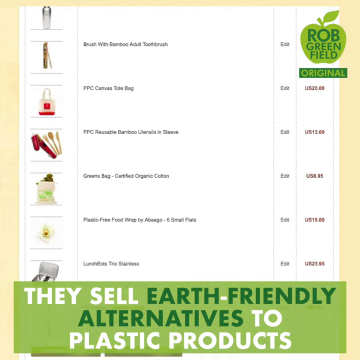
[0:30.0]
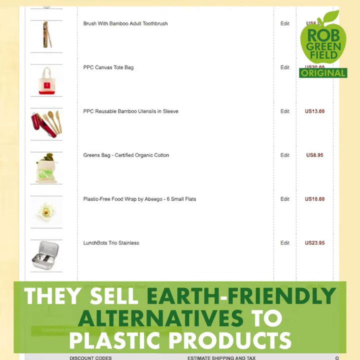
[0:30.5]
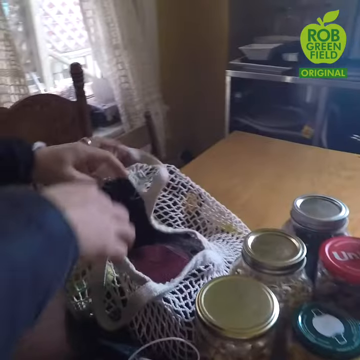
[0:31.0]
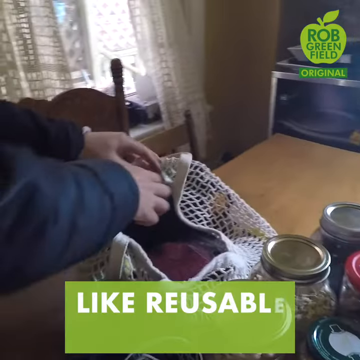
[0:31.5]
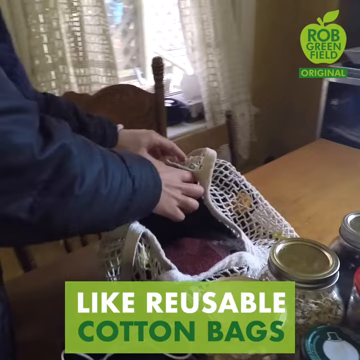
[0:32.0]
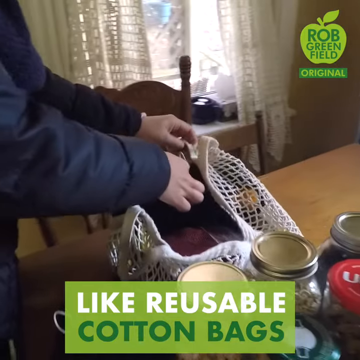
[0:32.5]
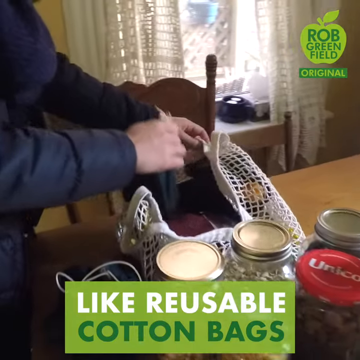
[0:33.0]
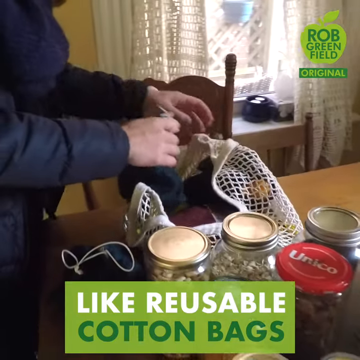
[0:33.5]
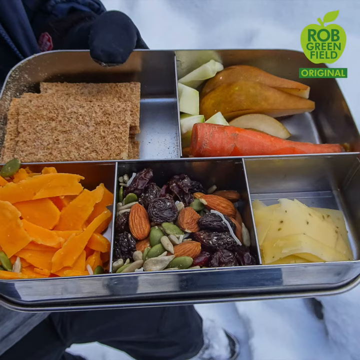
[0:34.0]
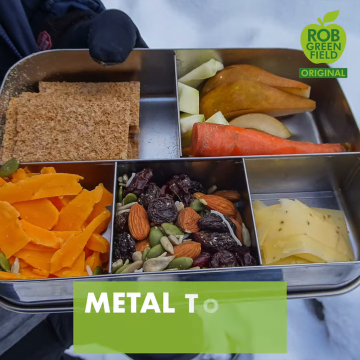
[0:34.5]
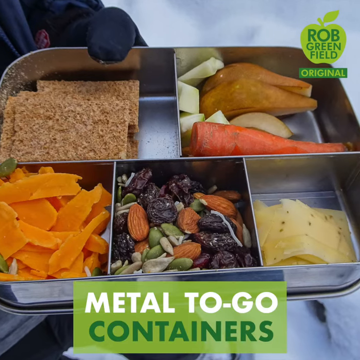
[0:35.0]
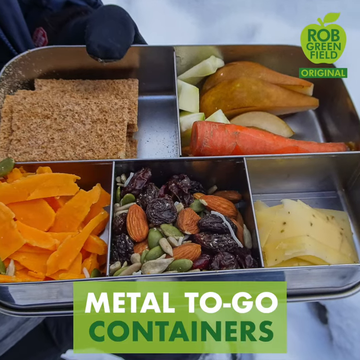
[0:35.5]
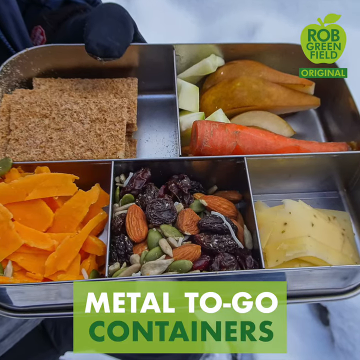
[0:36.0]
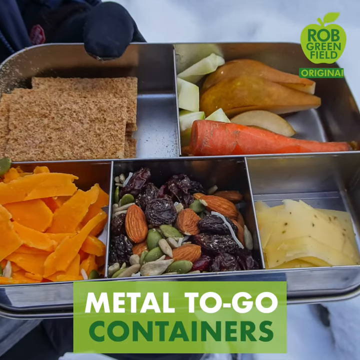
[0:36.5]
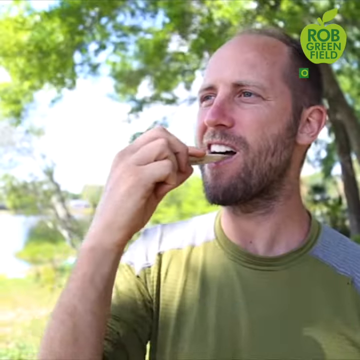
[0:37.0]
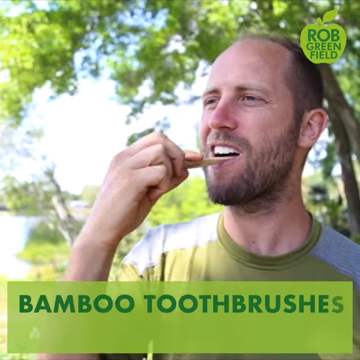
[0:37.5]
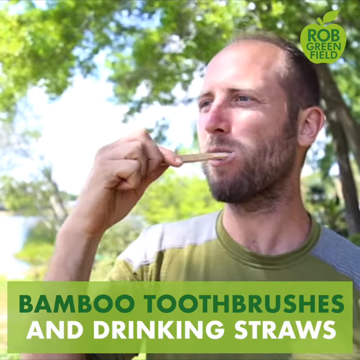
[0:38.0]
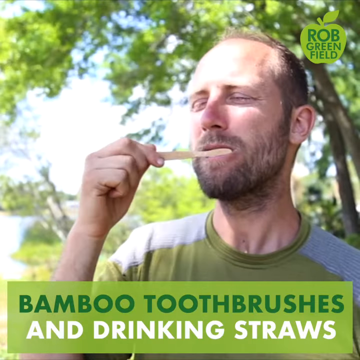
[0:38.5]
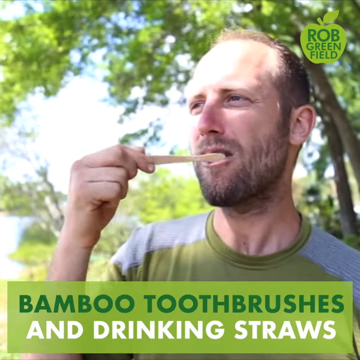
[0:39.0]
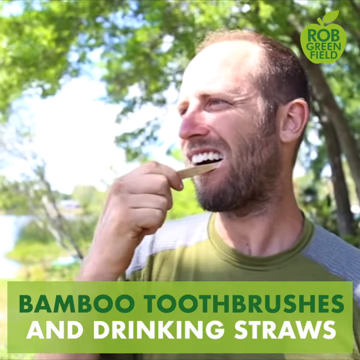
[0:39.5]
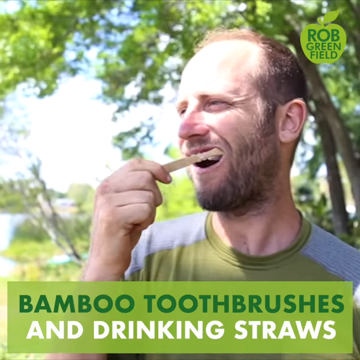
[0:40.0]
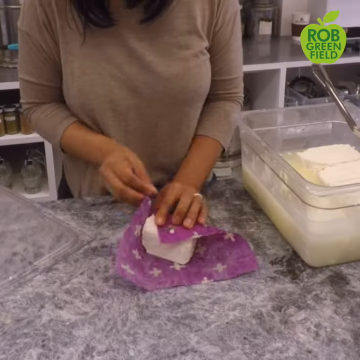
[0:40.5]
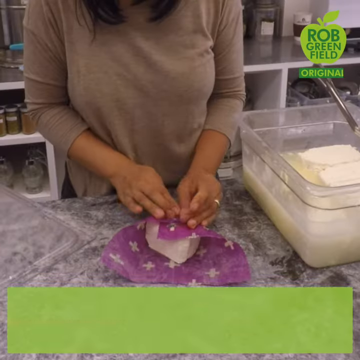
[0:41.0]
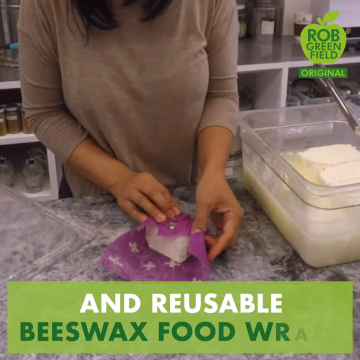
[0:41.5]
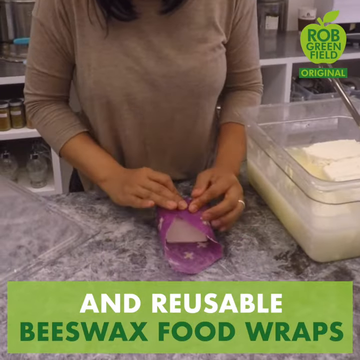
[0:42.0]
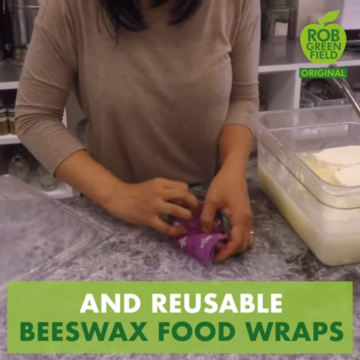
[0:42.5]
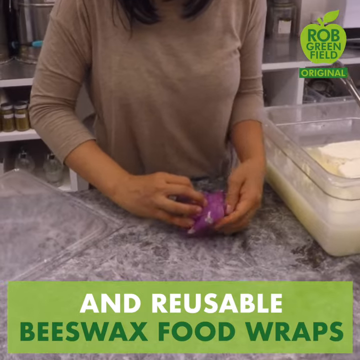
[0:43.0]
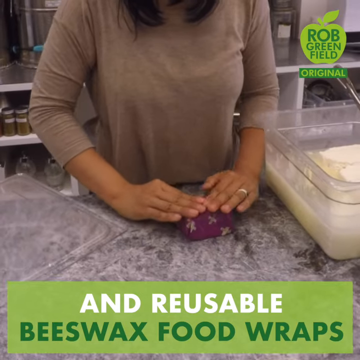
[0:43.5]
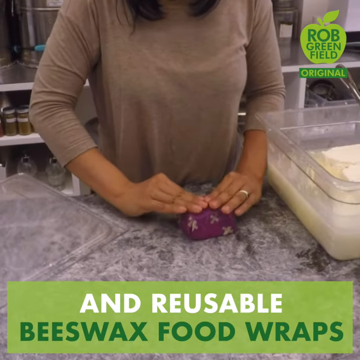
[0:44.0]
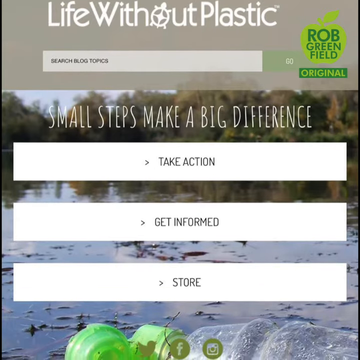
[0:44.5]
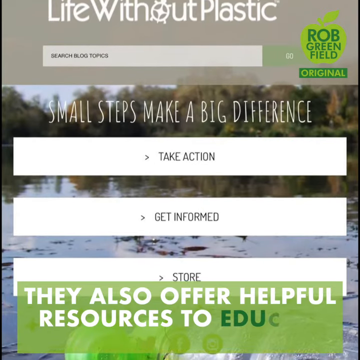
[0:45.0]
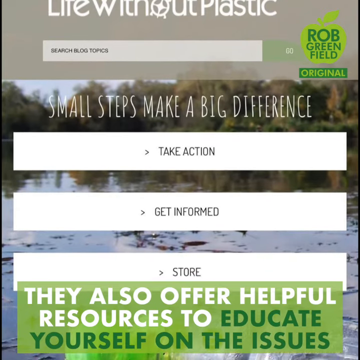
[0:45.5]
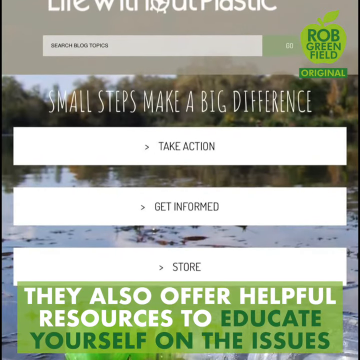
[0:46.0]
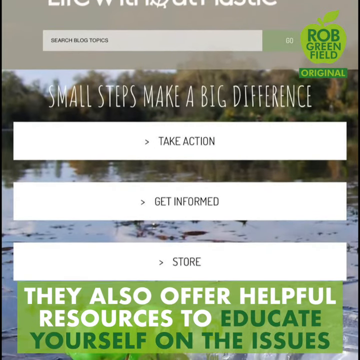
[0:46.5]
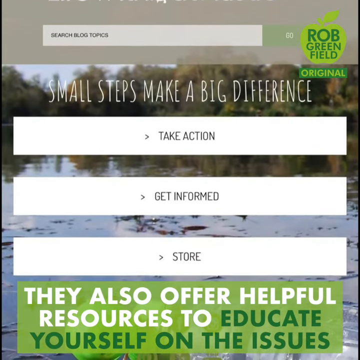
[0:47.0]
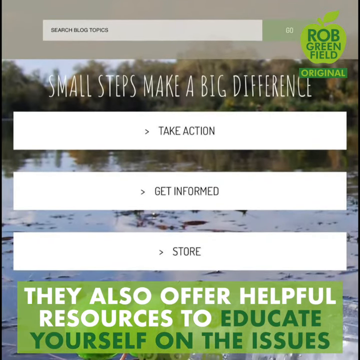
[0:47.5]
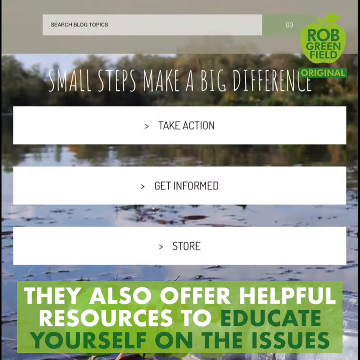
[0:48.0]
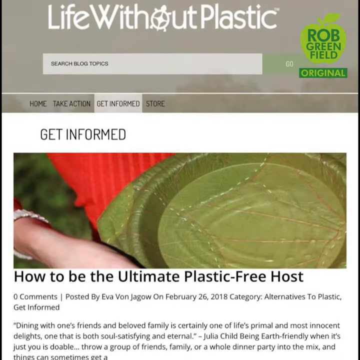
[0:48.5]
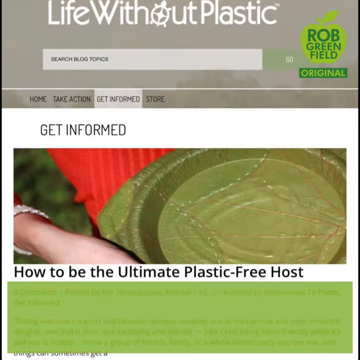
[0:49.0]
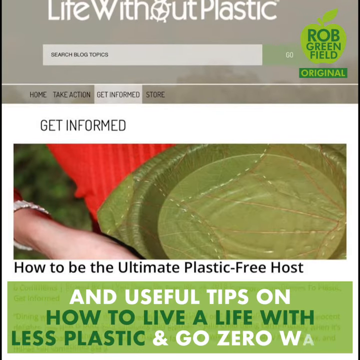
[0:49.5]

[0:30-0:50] The web page shows various products, with text at the bottom saying "they sell earth-friendly alternatives to plastic products". There is no sidebar now, just a kind of highlight of various products that can be scrolled down. A person in their house takes things, apparently groceries, out of a mesh bag, and text at the bottom reads "like reusable cotton bags". Next comes a metal divided container holding their lunch, with the text "metal to-go containers". A man brushes his teeth standing in front of a tree, with the text "bamboo toothbrushes and drinking straws". He has a straggly beard and wears a green shirt, and the toothbrush is beige. There is a tree to his right and tops of trees visible off to his left, and he seems really happy. A tan-skinned woman standing in a kitchen wraps what looks like cheese in a food wrap, with the text "reusable beeswax food wrap". The kitchen looks more industrial, with shelving behind her holding multiple jars of the same type, and next to her is a restaurant-style bin with cheese floating in a liquid. She wears a beige shirt and a wedding ring. A web page then says "they also offer helpful resources to educate yourself on these issues", and the page reads "small steps make a big difference. Take action. Get informed." It scrolls down, with a river in the background. A new web page says "get informed. How to be ultimate plastic-free host", and someone holds something that looks like a pie plate, though it is unclear what it is. The video then returns to the main screen.